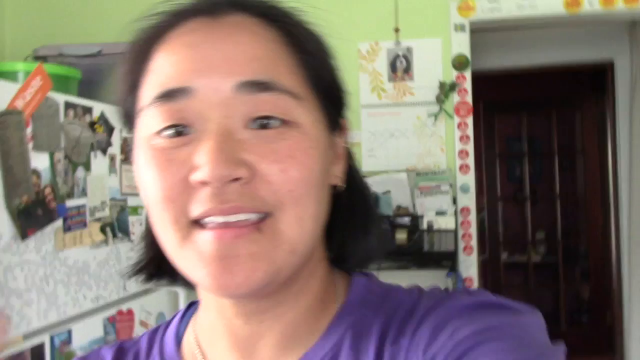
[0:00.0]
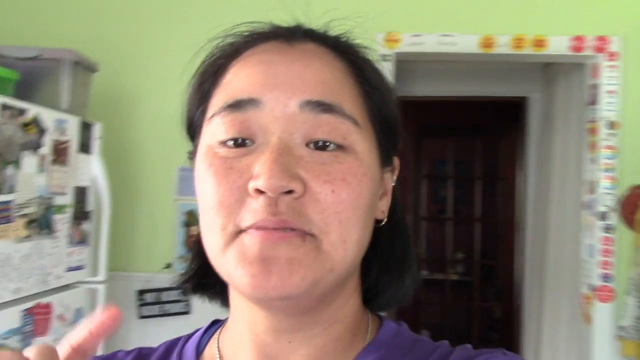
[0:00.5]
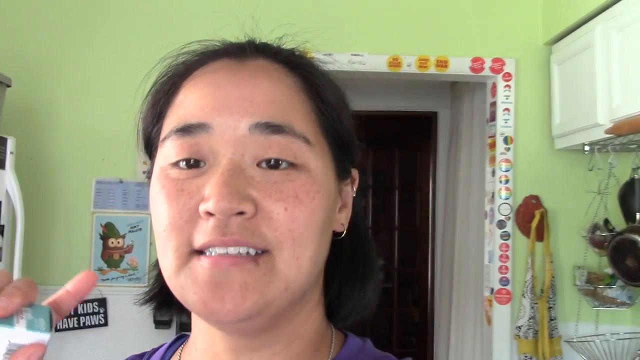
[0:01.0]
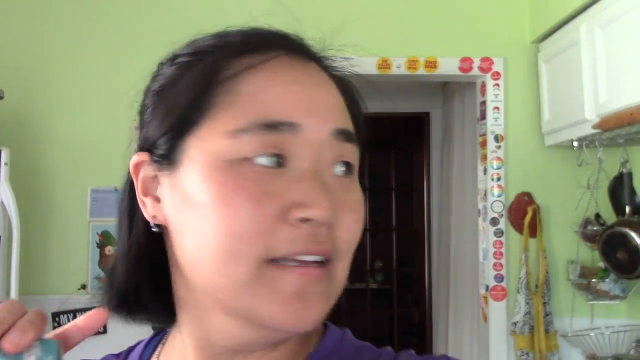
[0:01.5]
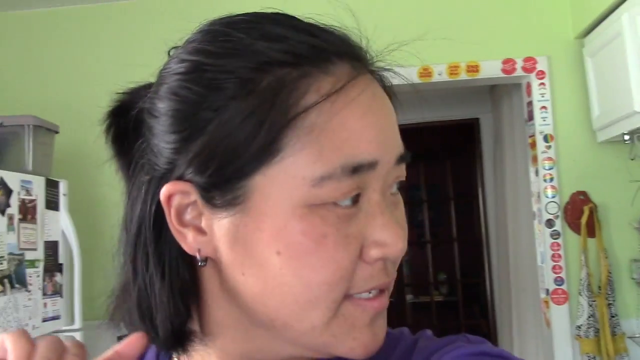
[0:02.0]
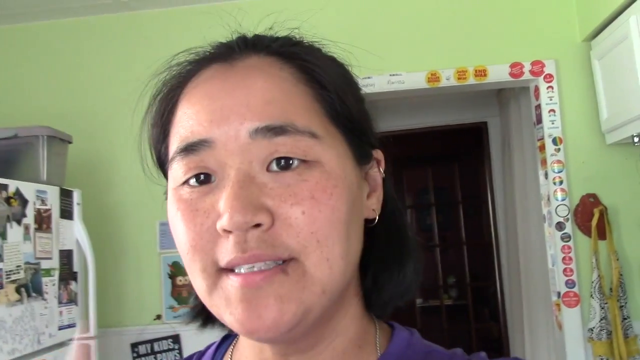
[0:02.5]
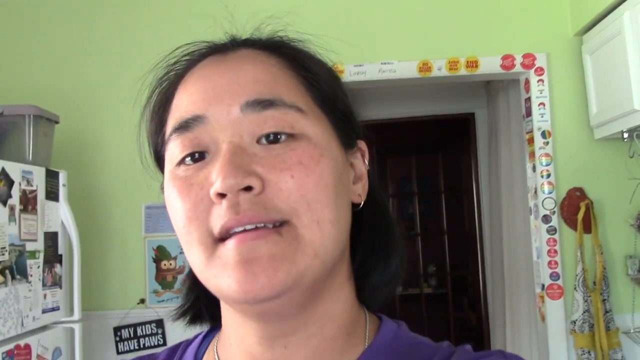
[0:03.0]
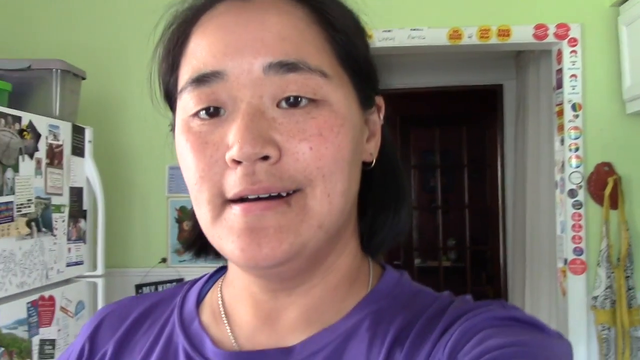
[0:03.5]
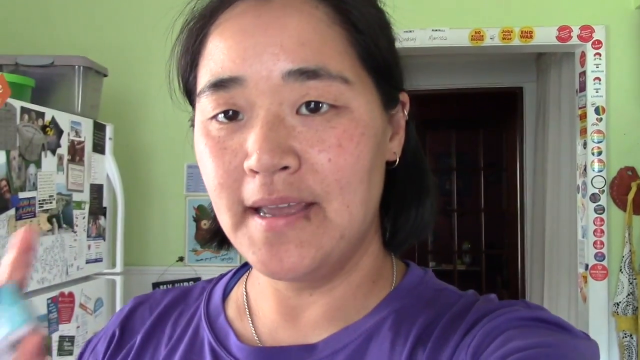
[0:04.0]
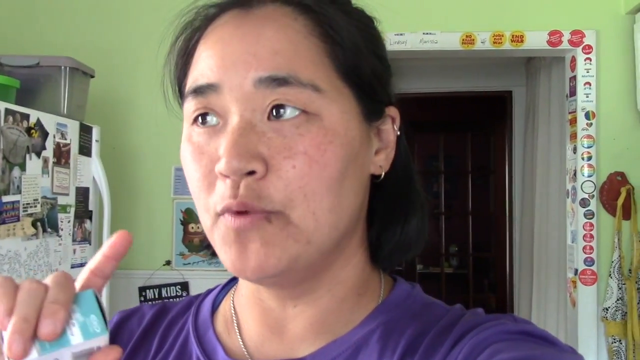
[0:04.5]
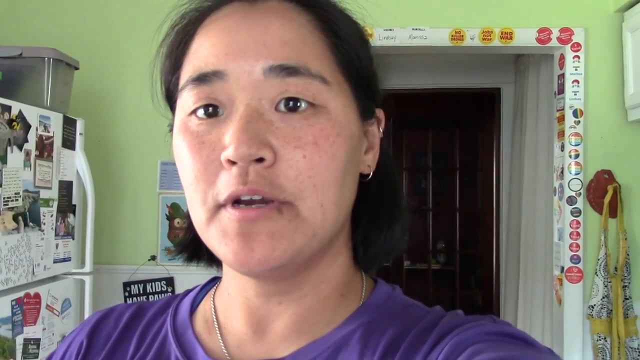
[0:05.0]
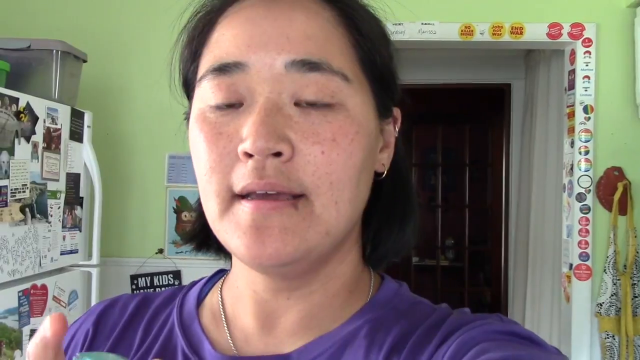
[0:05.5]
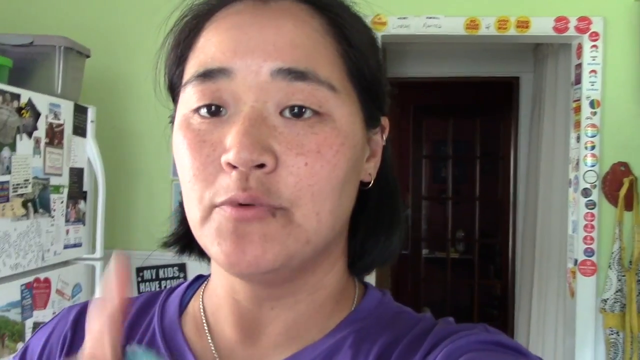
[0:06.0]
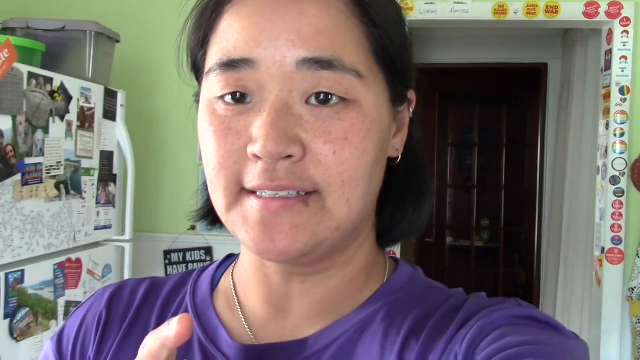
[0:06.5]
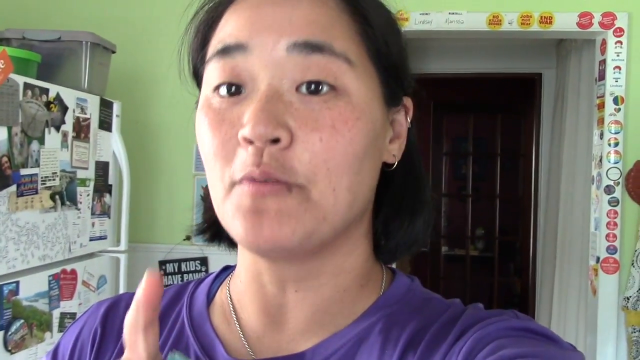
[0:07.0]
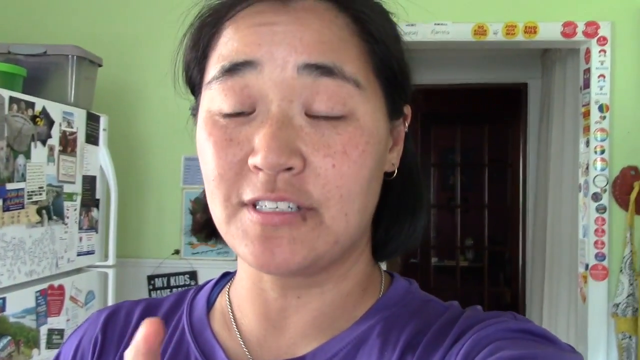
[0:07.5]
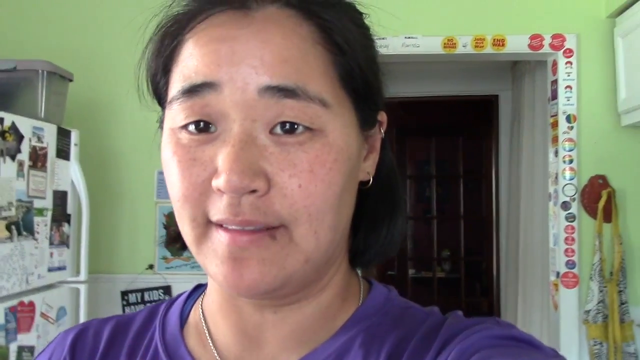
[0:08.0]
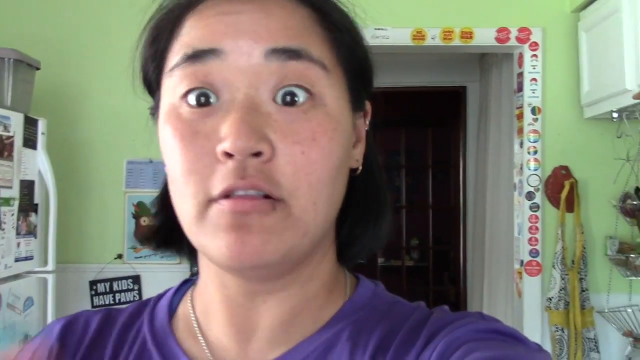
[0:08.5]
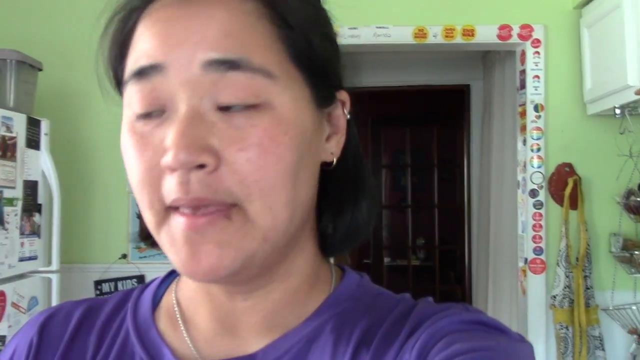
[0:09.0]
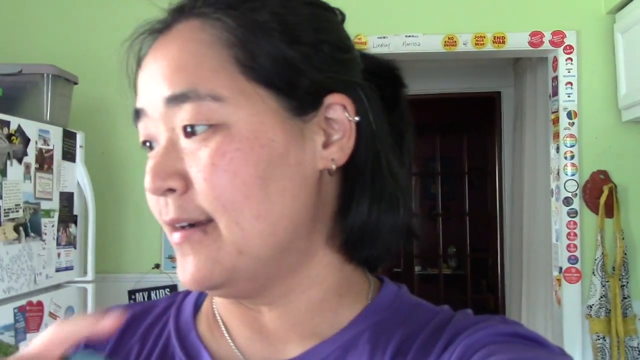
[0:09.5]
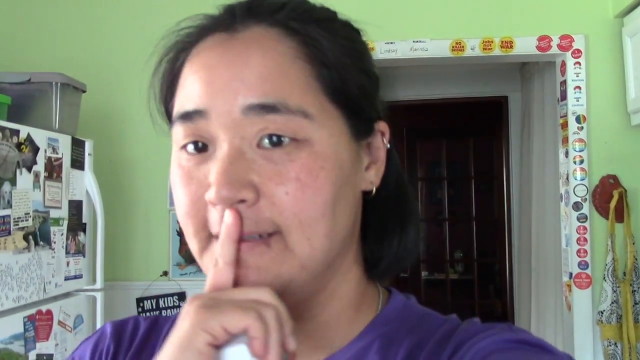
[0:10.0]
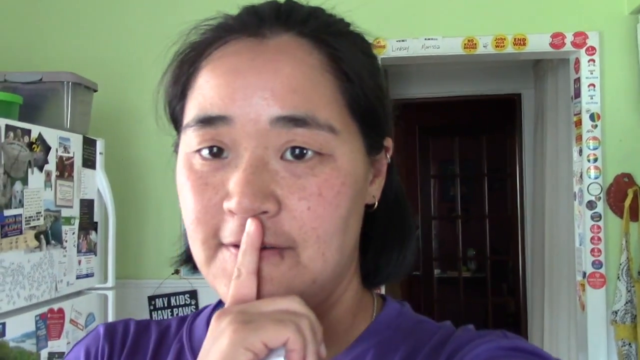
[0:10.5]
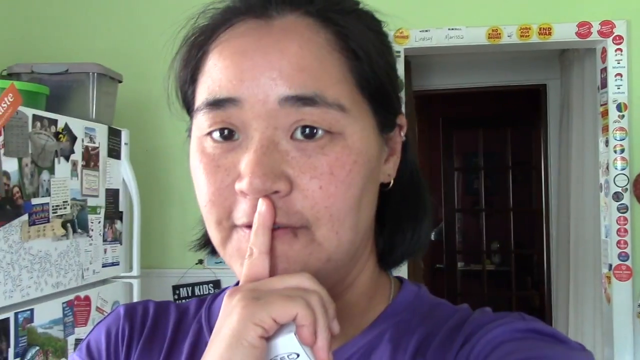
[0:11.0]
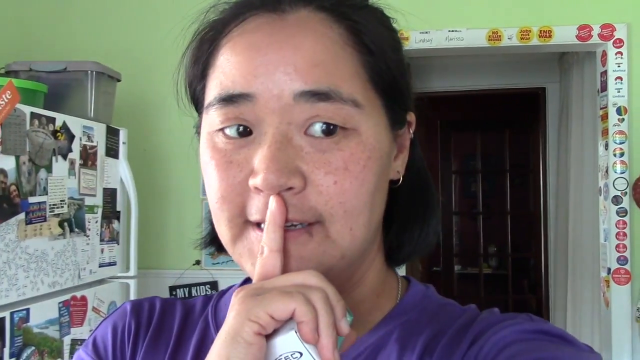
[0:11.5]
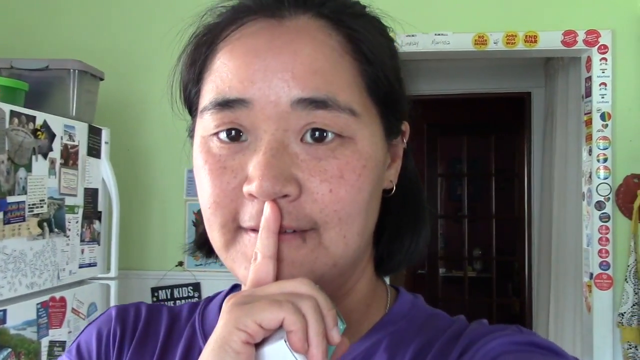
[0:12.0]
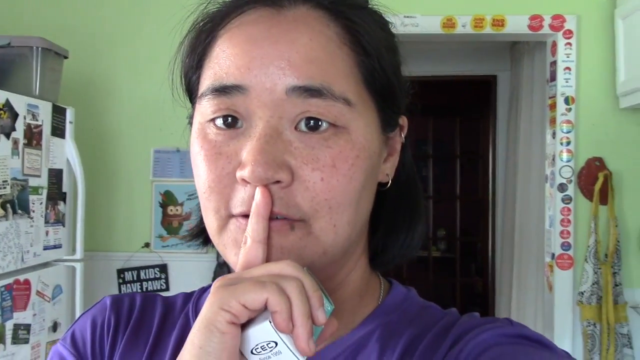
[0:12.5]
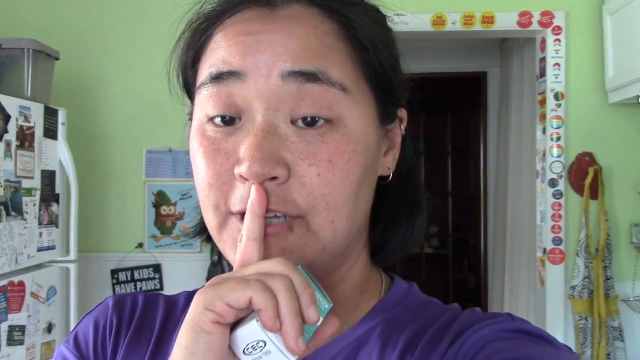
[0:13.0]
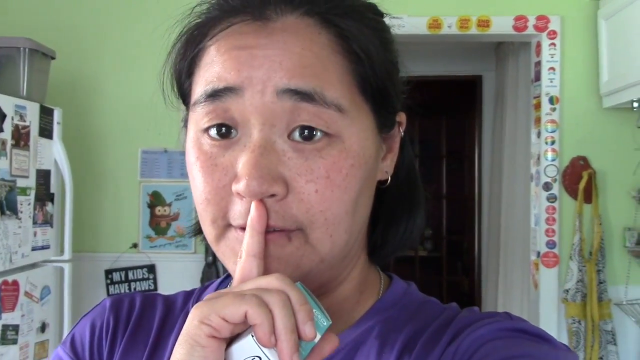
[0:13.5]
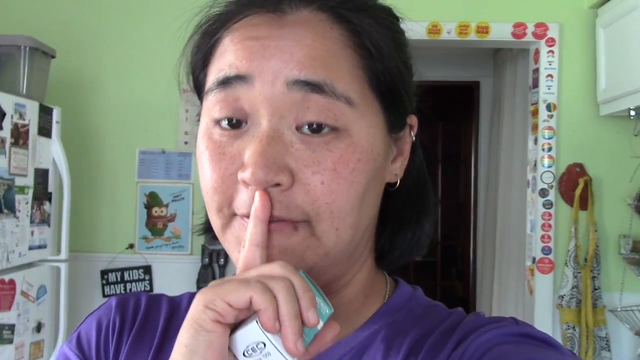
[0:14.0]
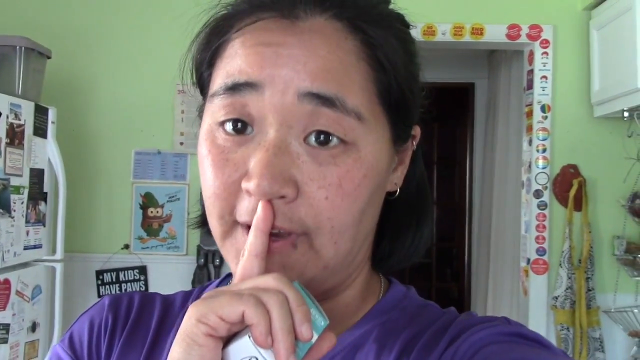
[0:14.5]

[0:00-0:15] A young Asian woman with short black hair, earrings and a purple t-shirt talks into the camera. She appears to be inside what could be her home, possibly the kitchen: there is a refrigerator full of pictures to her left, and the doorway behind her has many stickers. She speaks to the camera and points at it as she talks. She has two earrings on her left ear; her right ear is not visible. The kitchen has bright, light green walls and a lot of things in it. She seems to be explaining something about what the video is for.